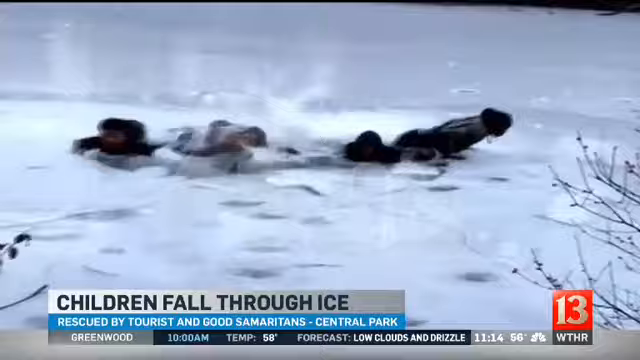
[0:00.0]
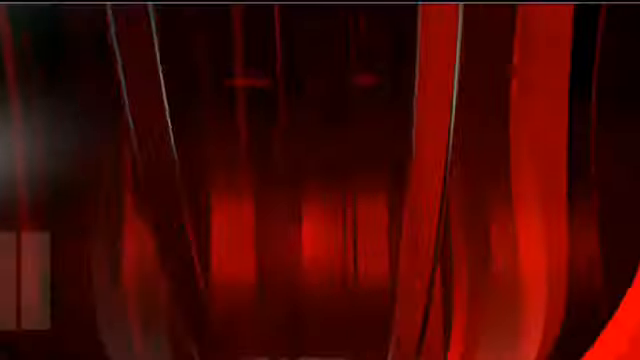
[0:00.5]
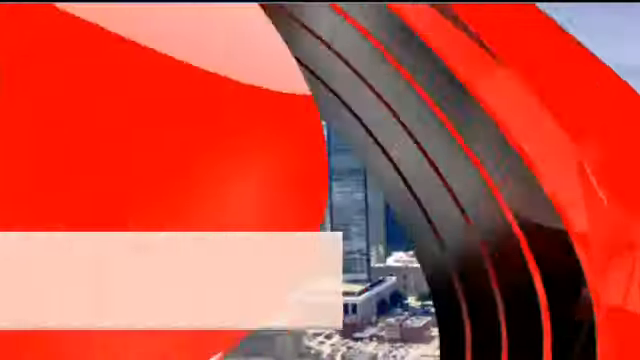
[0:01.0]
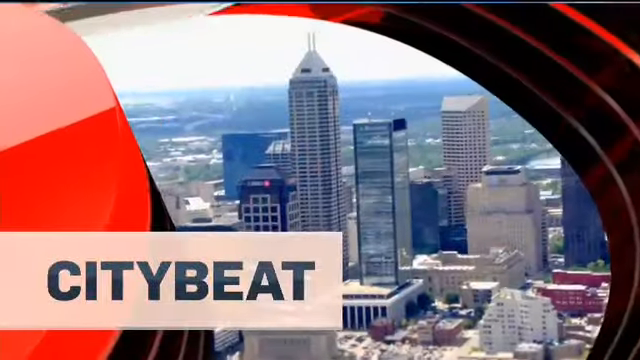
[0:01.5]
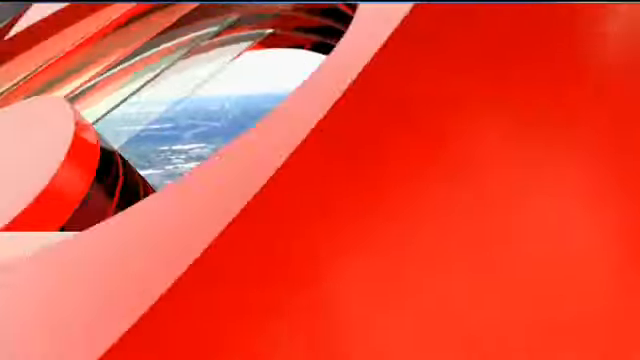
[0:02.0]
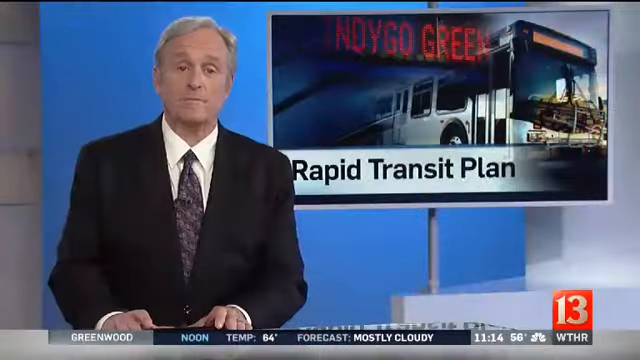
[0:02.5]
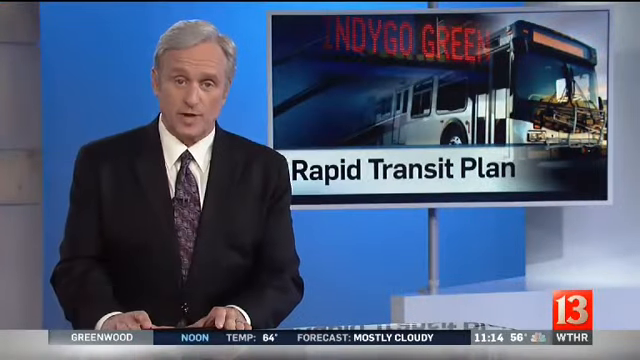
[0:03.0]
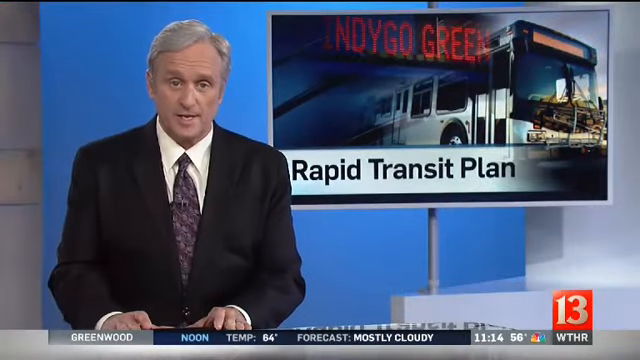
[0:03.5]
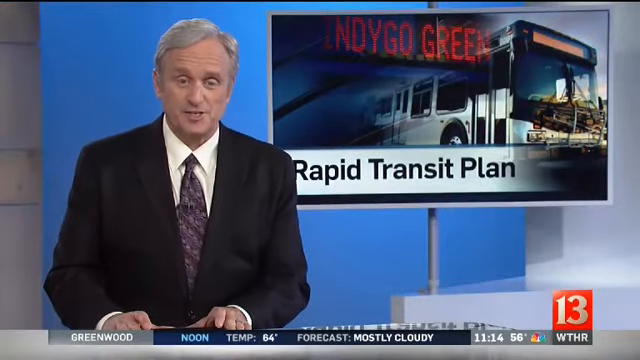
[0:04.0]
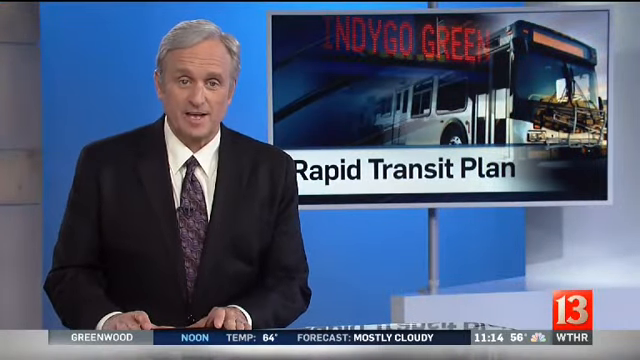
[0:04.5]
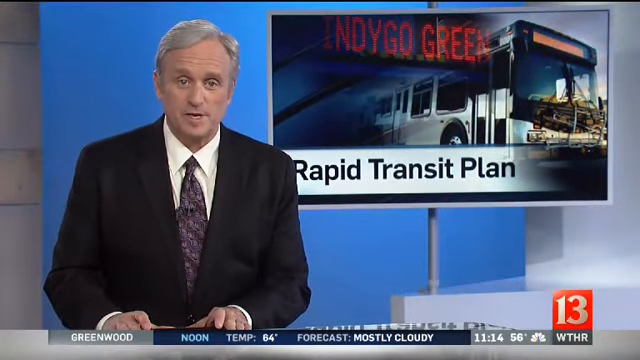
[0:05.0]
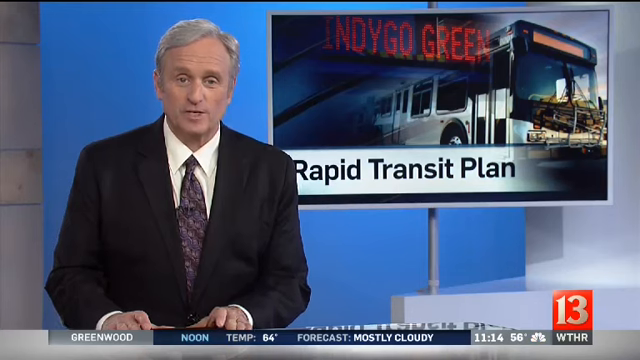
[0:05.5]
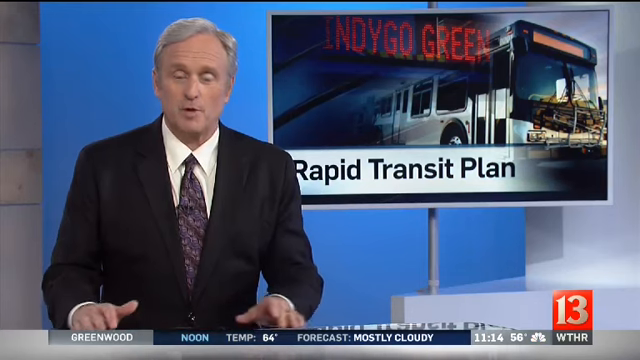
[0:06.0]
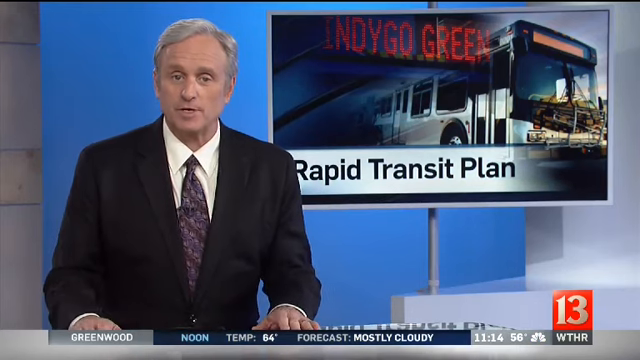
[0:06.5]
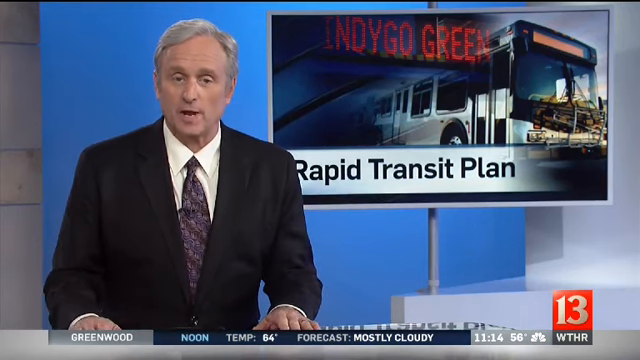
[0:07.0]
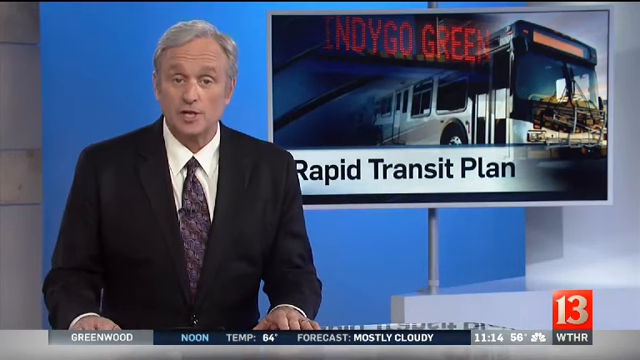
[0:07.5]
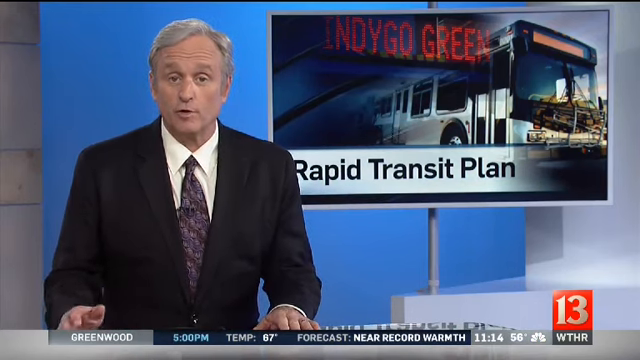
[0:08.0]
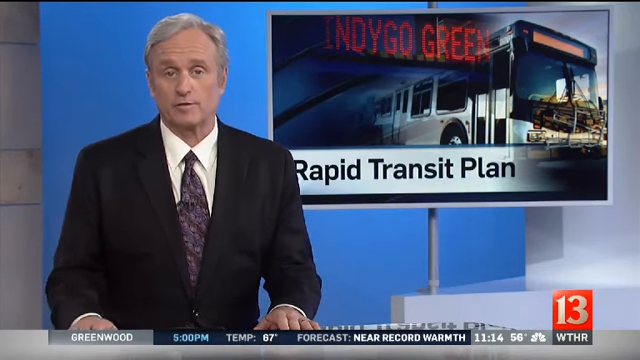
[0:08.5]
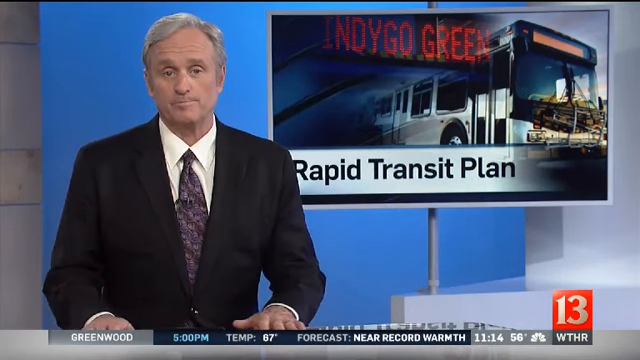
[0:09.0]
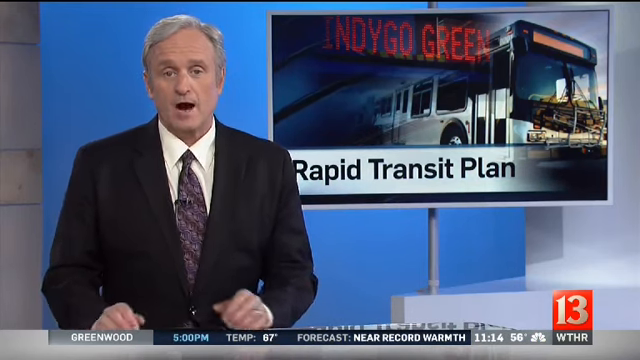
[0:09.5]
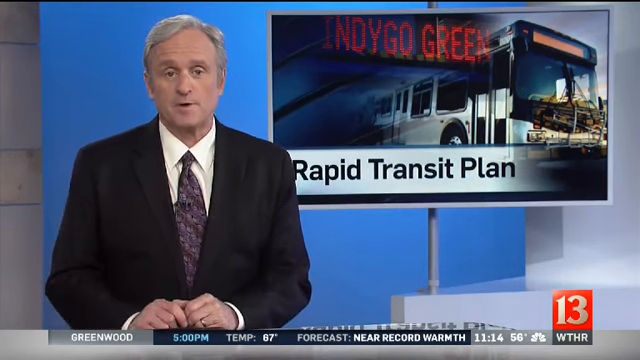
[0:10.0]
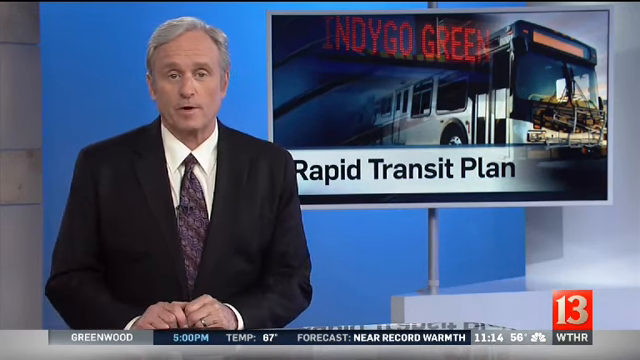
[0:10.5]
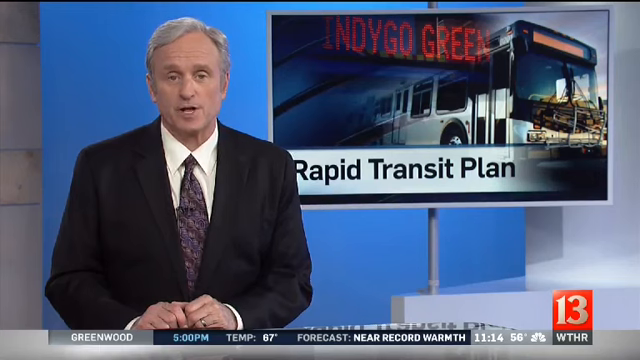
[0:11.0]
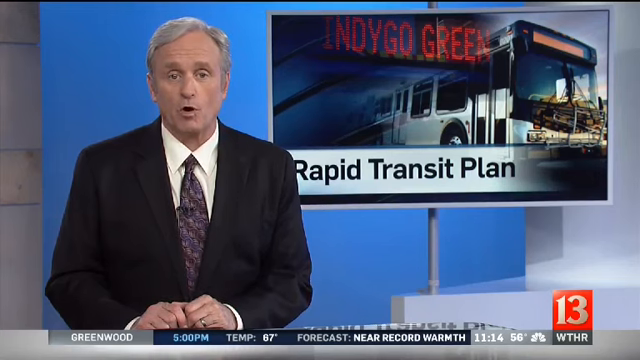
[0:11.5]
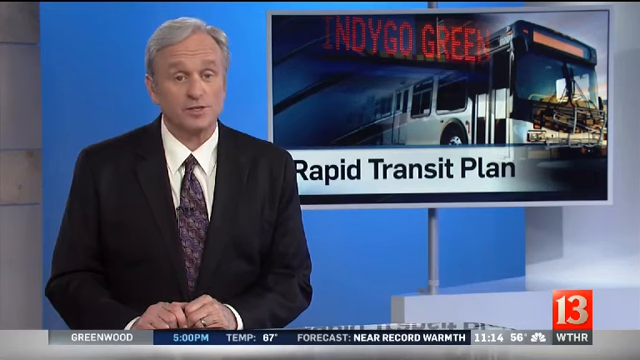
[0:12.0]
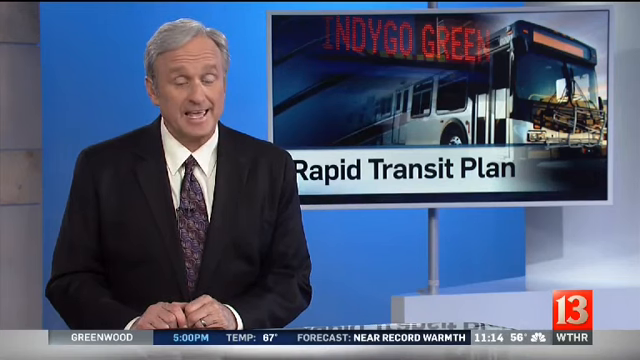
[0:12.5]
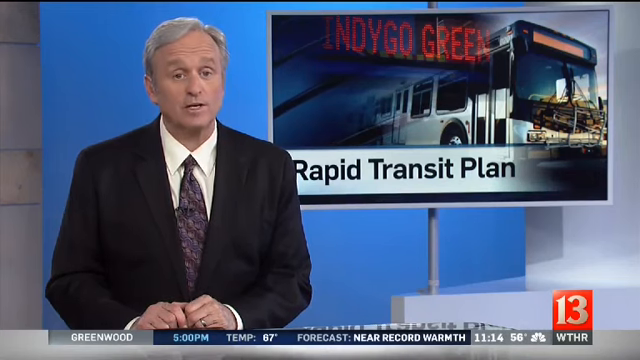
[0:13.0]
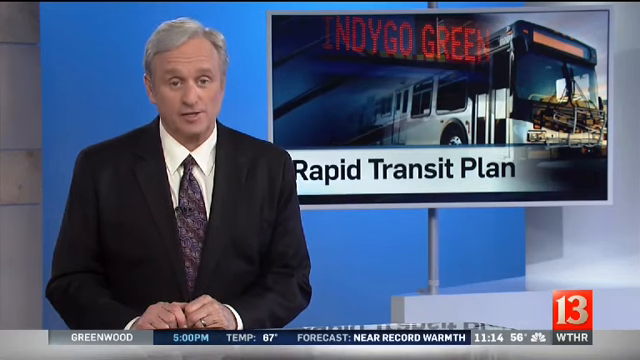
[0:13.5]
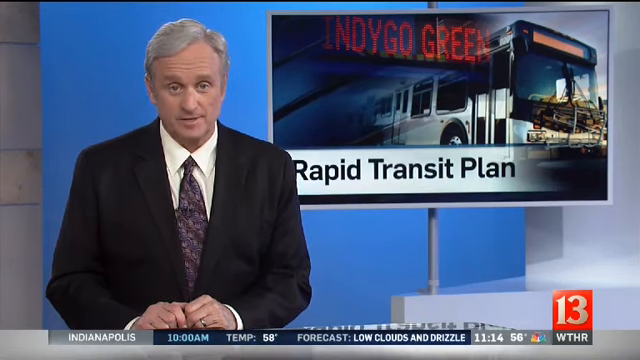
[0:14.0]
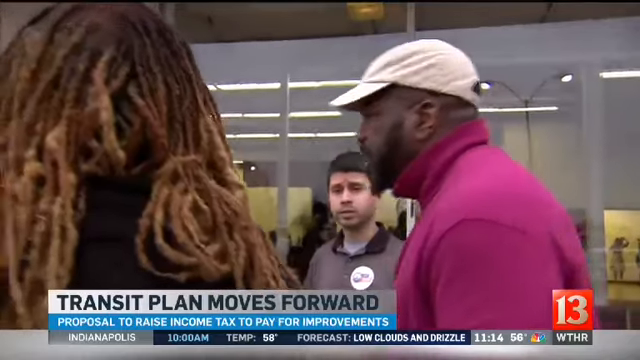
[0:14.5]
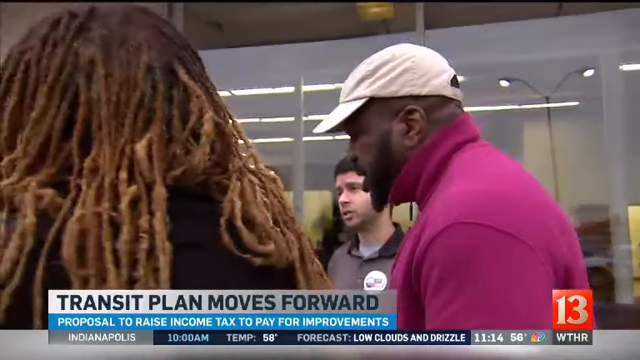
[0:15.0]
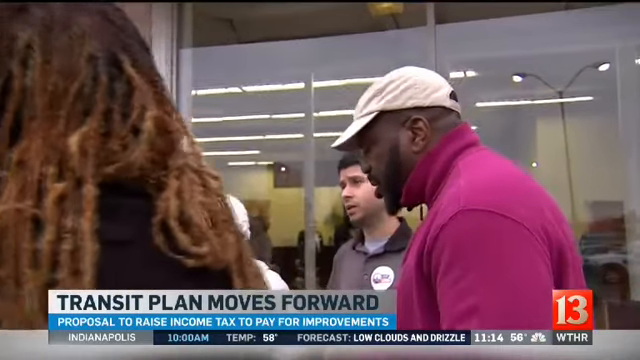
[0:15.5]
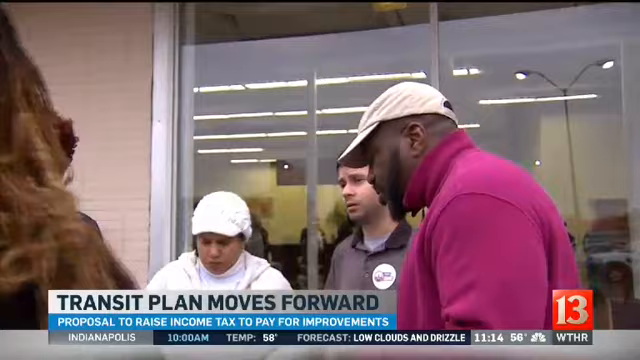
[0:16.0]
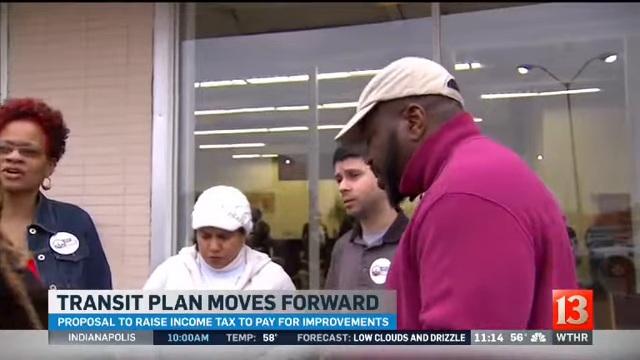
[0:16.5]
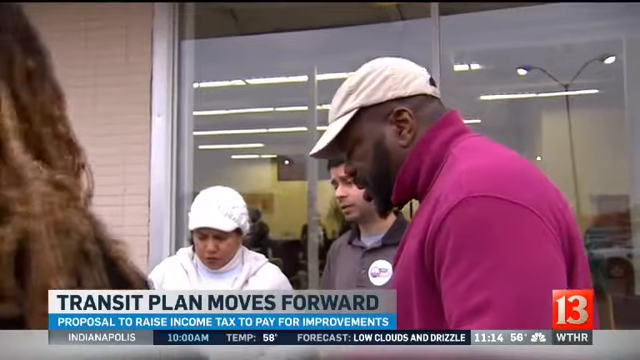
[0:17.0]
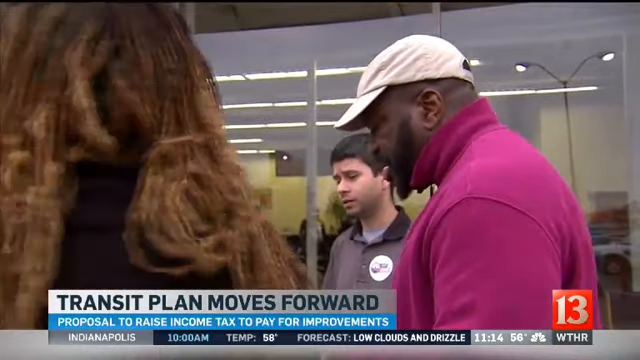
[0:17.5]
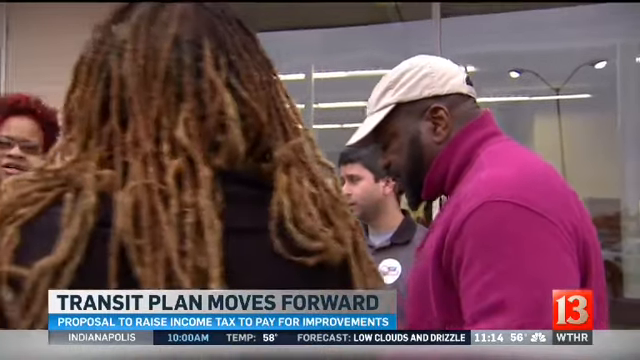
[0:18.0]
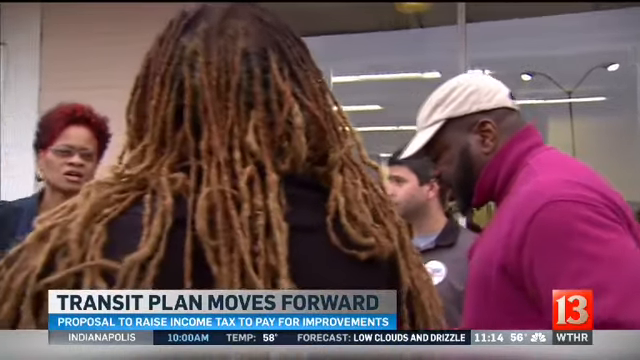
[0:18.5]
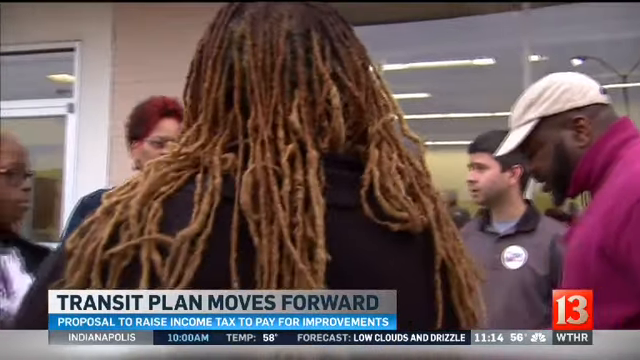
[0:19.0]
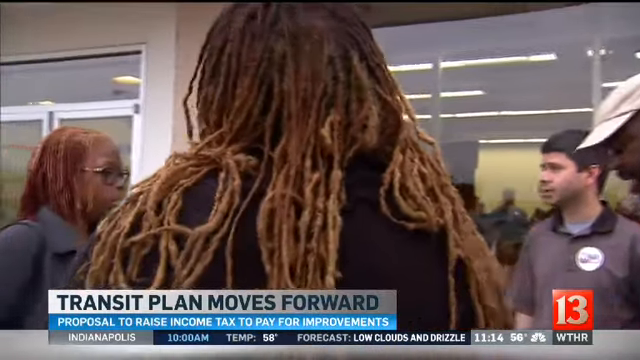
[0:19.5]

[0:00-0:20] What look like figures, apparently three of them, are crawling out of something, though it is hard to tell. A bit of a tree is visible on the right-hand side, a logo at the bottom says "13", and text reads "children fall through ice". A red, abstract logo comes up on the screen with a city skyline of skyscrapers in it, and "city beat" appears on the left. A news anchor is talking, sitting at a desk; the desk itself is not visible, but he is. The little red square with "13" in it is on the right-hand side. He is in front of a blue wall, has silver hair, and wears a black suit, a white shirt and a purple tie. Next to him, a silver display shows the image of a bus with "indigo green" in red letters, and underneath, in a little rectangle with a light blue background, it says "rapid transit plan". As he talks, he moves his hands over onto the desk. At the bottom it says "Greenwood, 5 p.m., temperature 67". The image changes to a bunch of people talking, including a woman with dreadlocks and another woman with shorter dreadlocks, with people standing around, and text reads "Rapid transit plan moves forward".